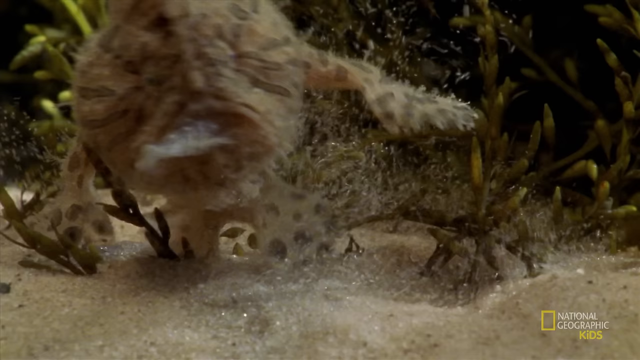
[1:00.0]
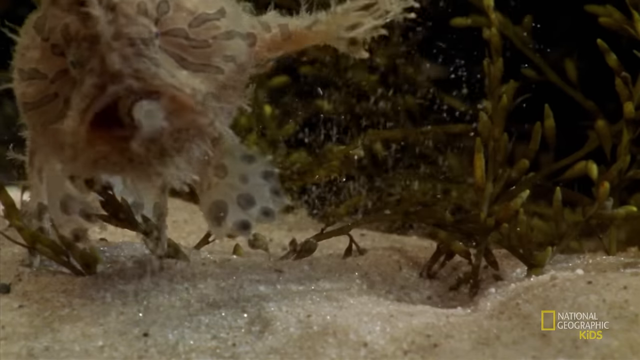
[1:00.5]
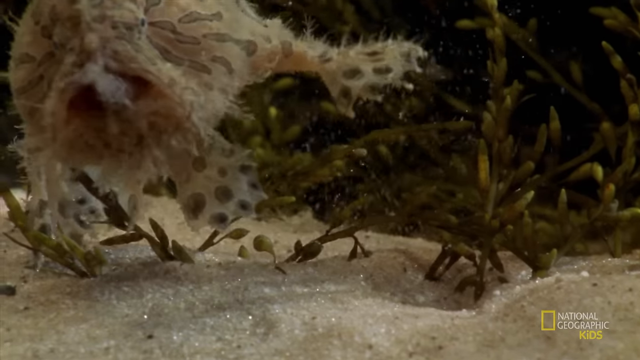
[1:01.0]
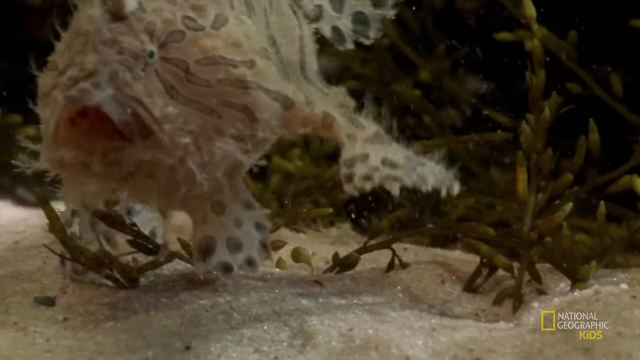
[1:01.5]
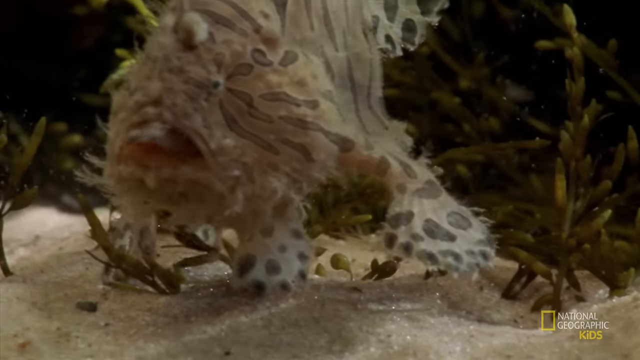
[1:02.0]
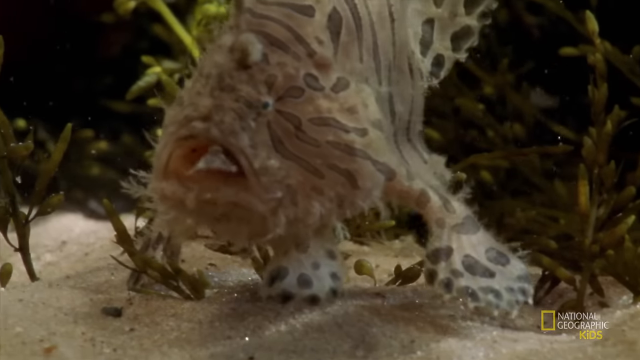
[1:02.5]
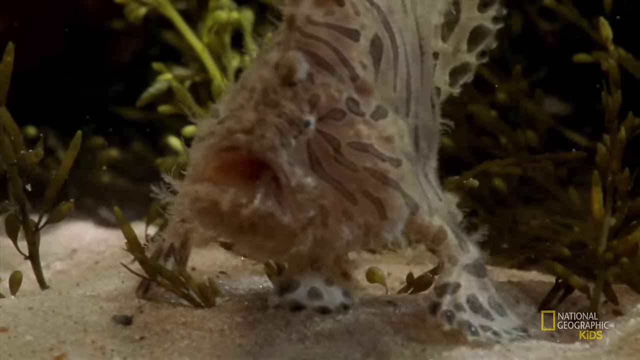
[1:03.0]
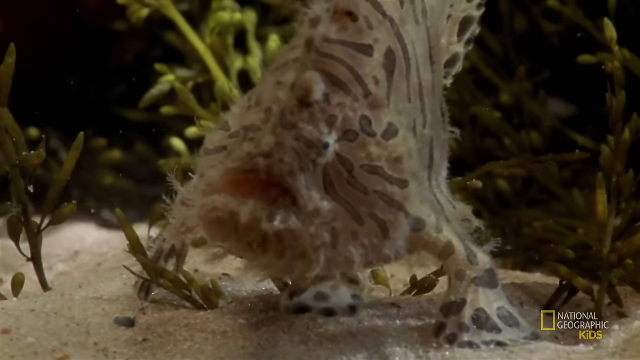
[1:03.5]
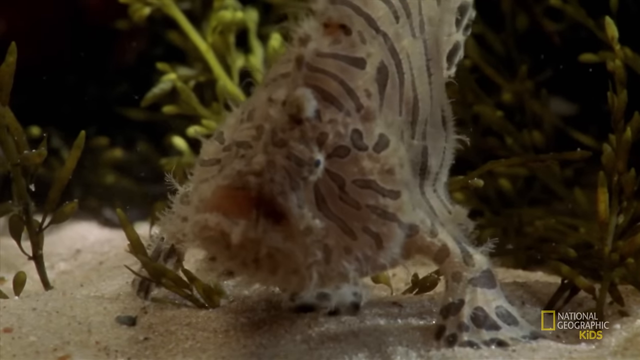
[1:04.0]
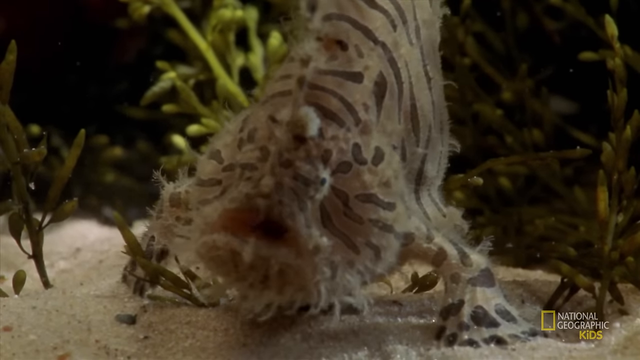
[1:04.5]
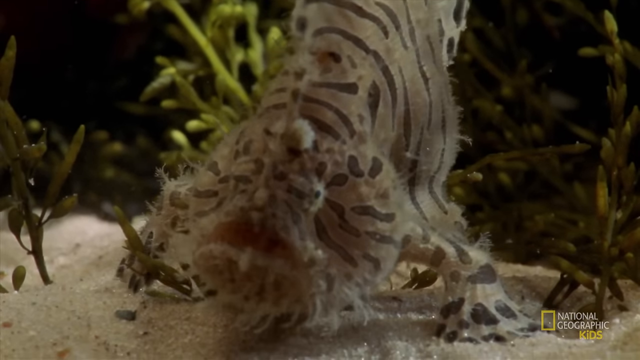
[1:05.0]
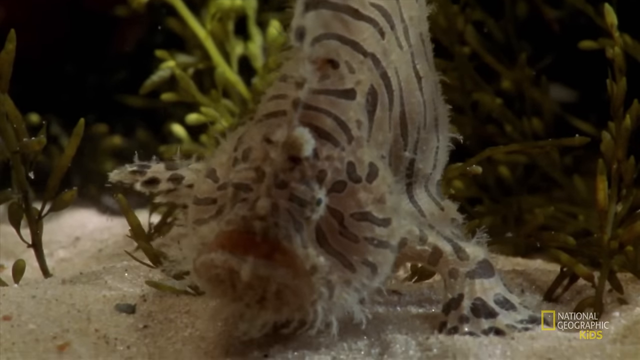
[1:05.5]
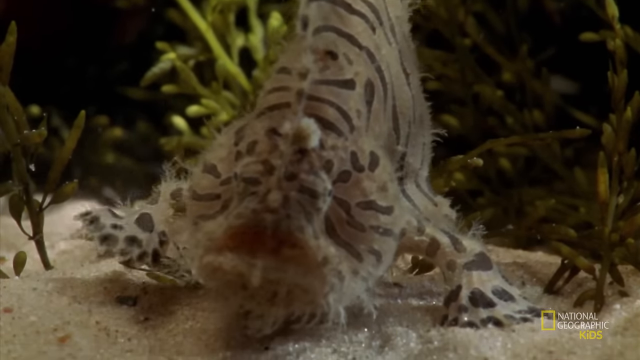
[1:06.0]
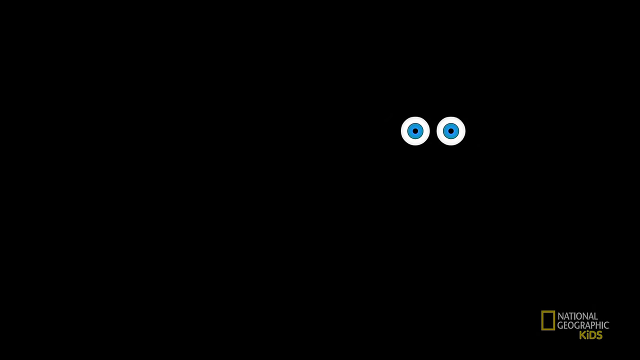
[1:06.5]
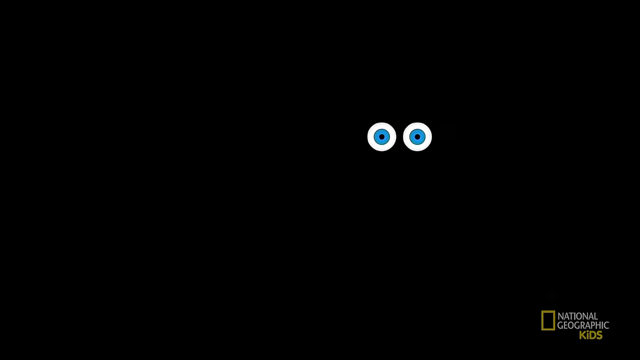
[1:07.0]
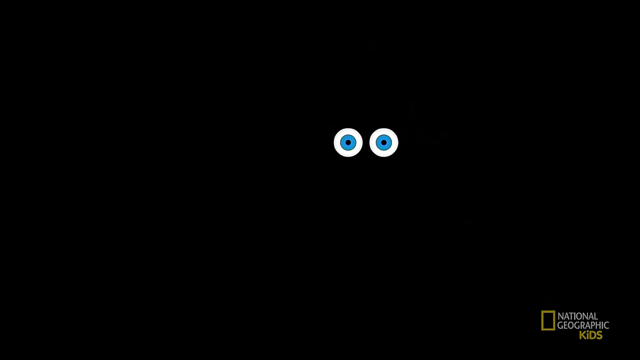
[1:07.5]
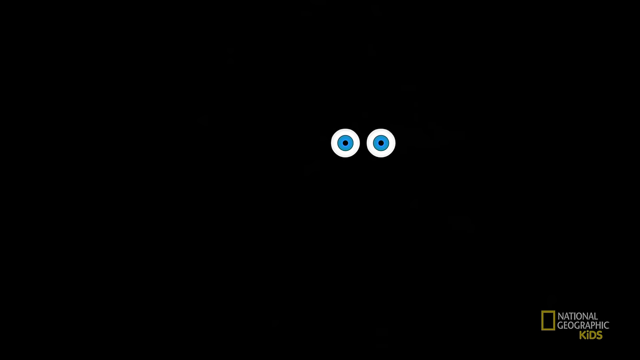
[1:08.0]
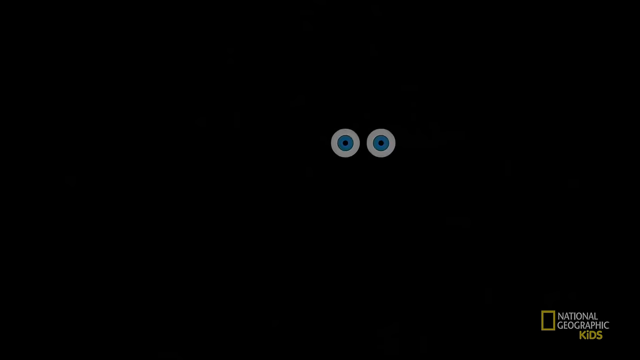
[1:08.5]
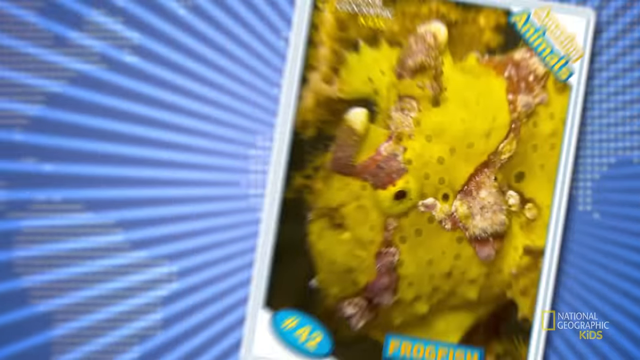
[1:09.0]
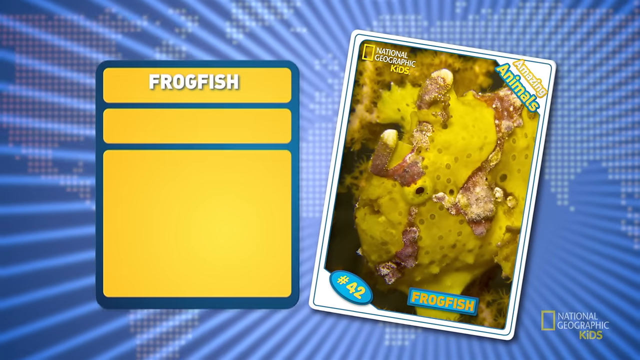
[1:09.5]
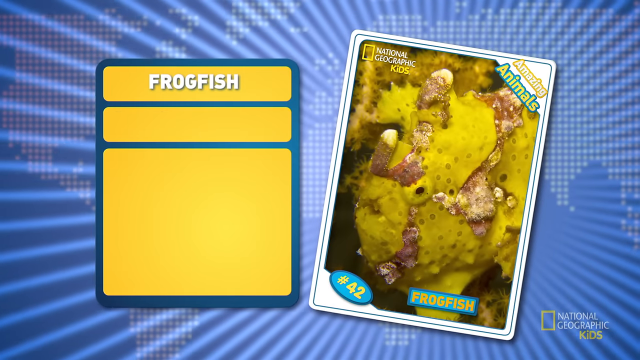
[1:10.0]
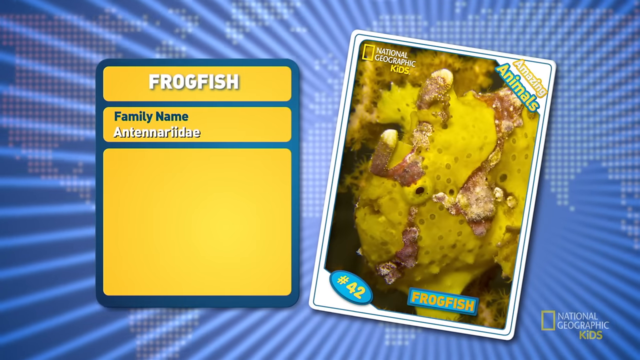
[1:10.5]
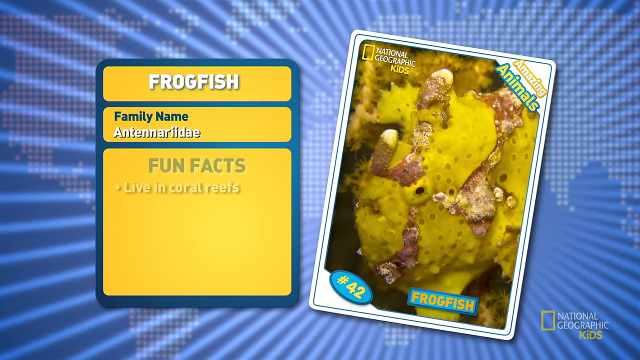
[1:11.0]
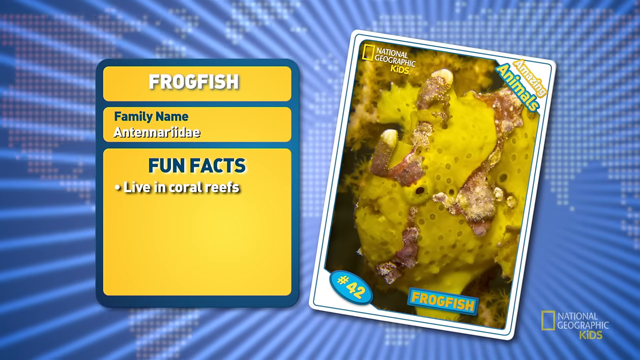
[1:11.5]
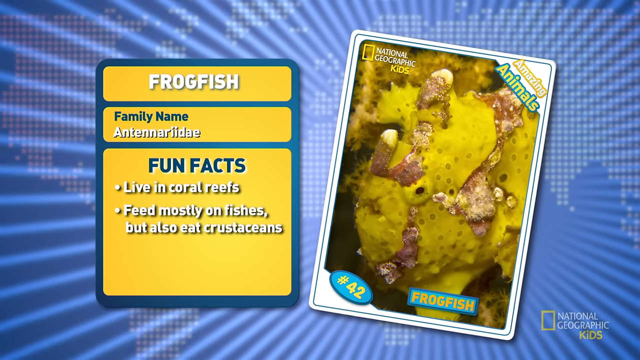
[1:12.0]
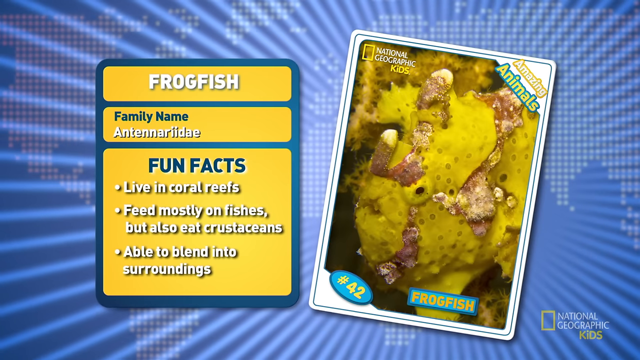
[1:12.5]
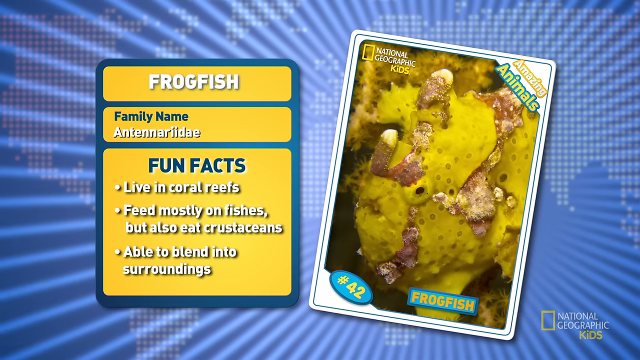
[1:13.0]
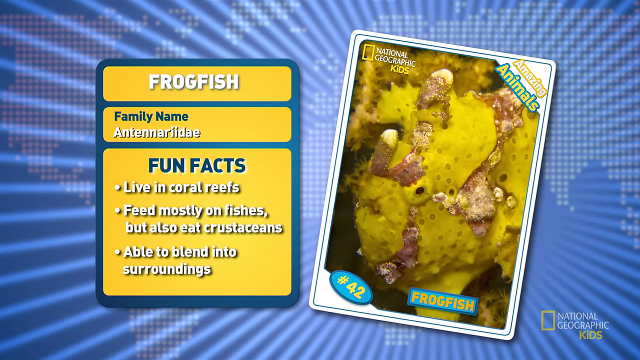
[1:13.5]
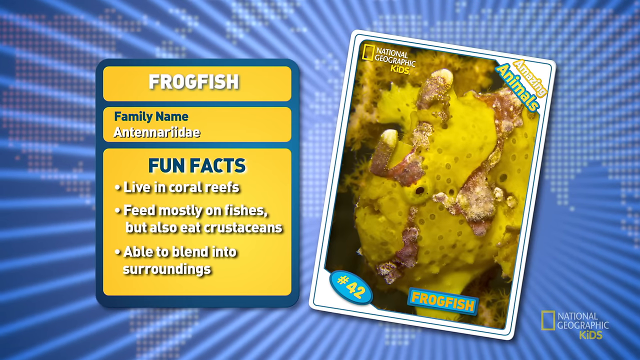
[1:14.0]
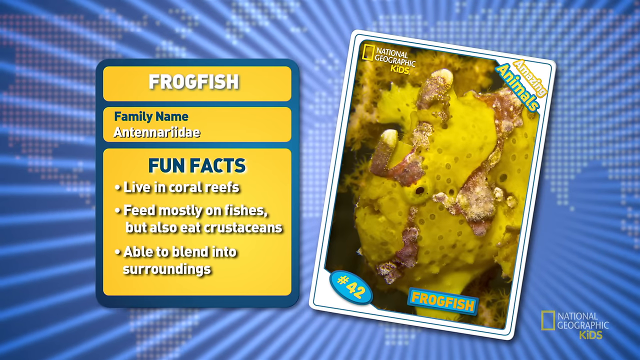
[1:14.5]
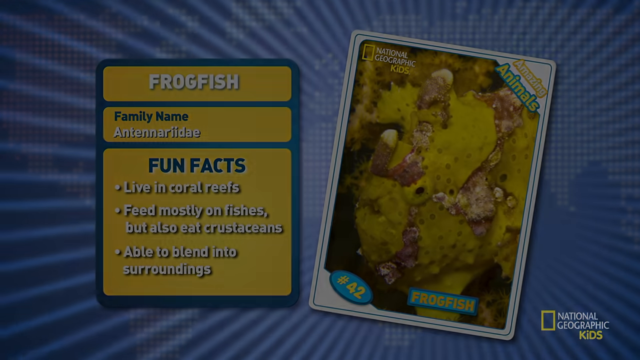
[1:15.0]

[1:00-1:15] The frogfish has successfully caught its prey. The frogfish is not swimming but walking on the seafloor. The video then cuts to a black background with blue eyes floating on it and blinking. Finally, a blue background appears with two things on it: on the right, a photo of the fish, apparently the frogfish, and on the left, a card with information about the fish, some fun facts, and the family name.